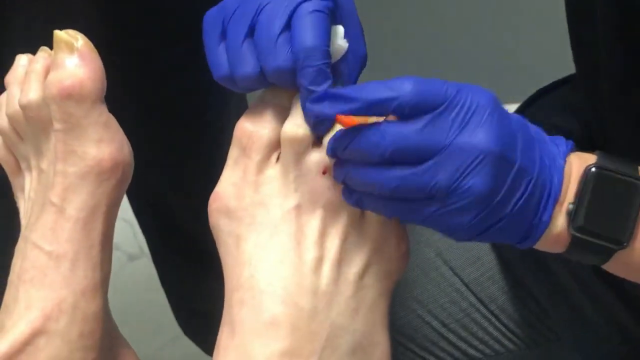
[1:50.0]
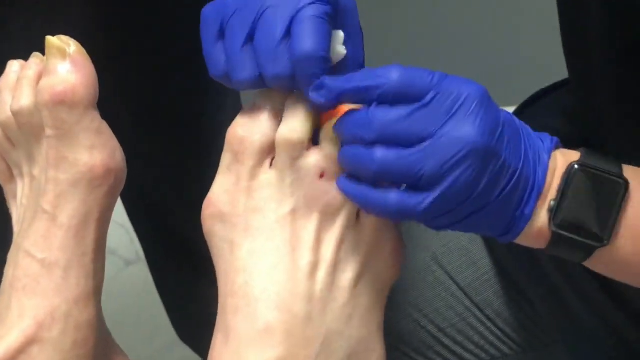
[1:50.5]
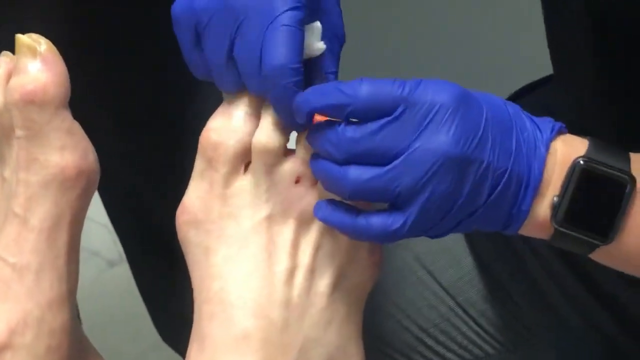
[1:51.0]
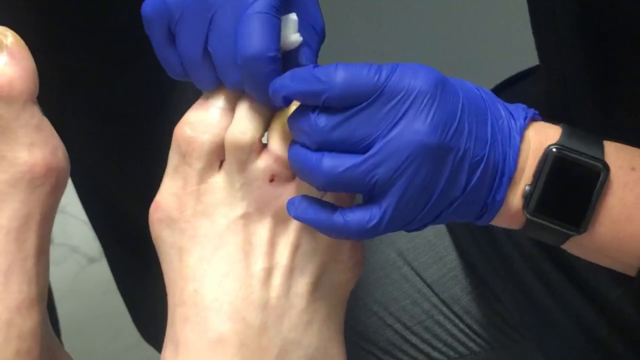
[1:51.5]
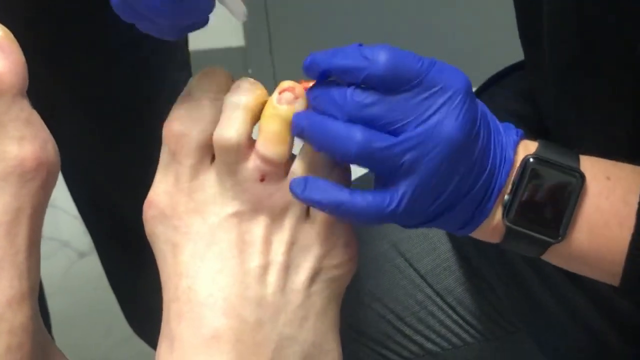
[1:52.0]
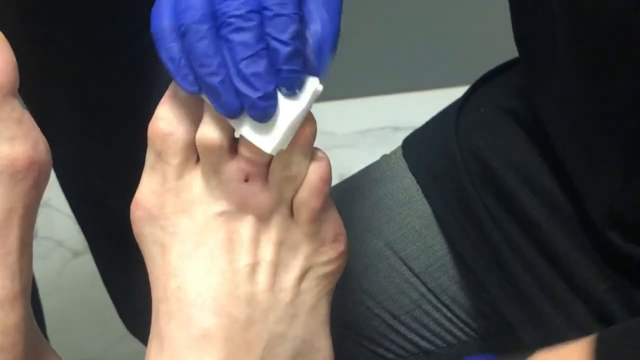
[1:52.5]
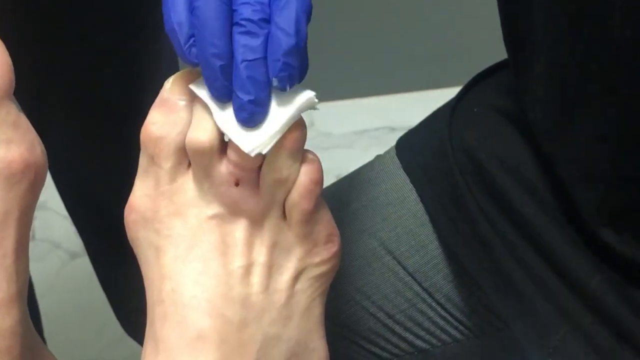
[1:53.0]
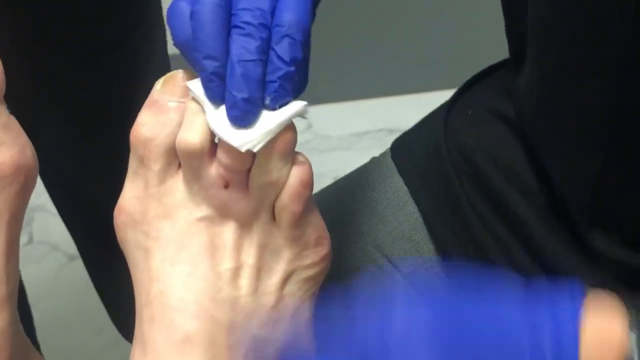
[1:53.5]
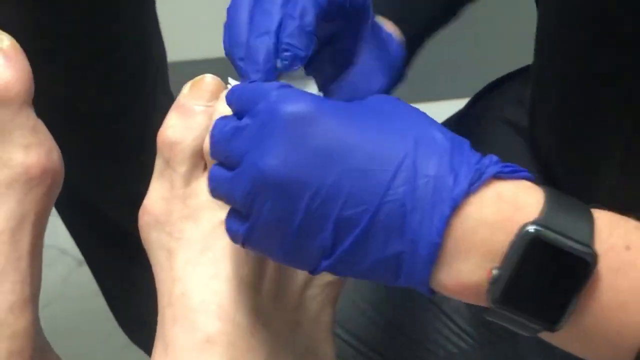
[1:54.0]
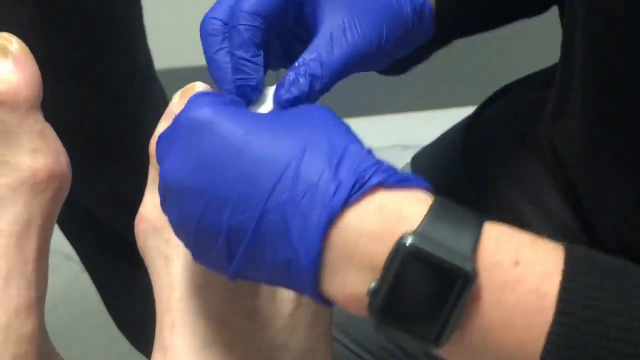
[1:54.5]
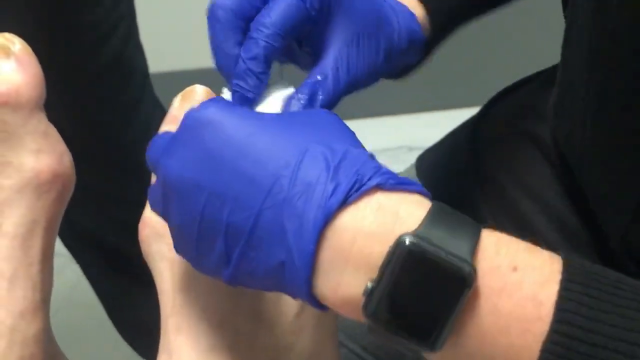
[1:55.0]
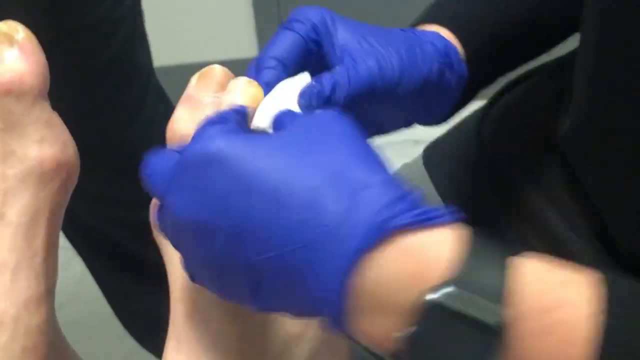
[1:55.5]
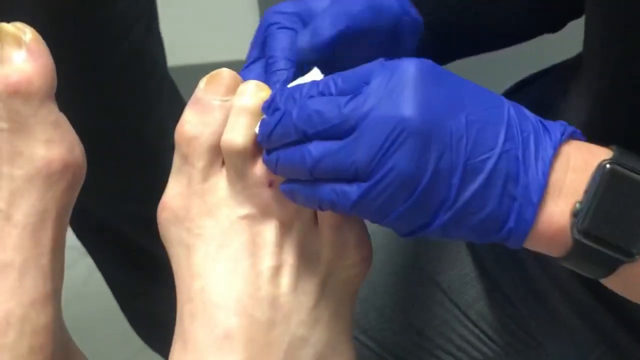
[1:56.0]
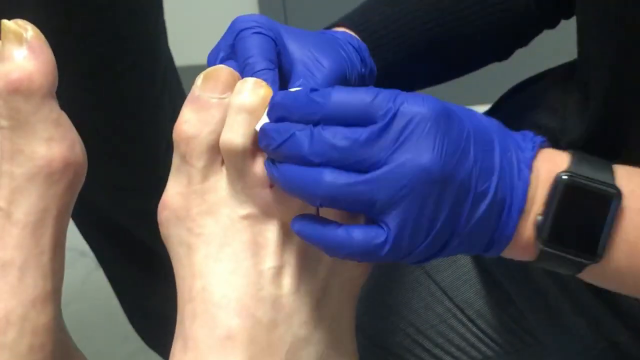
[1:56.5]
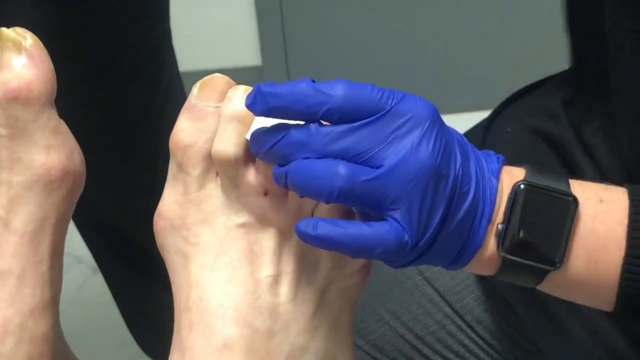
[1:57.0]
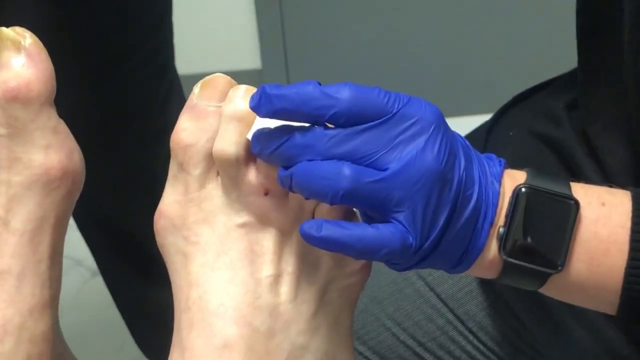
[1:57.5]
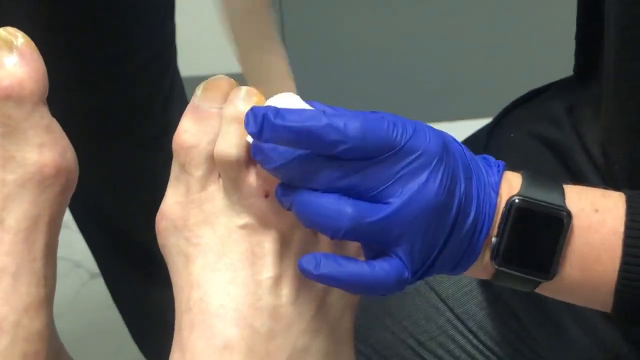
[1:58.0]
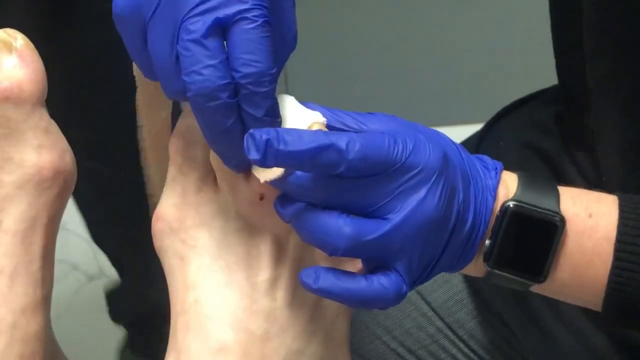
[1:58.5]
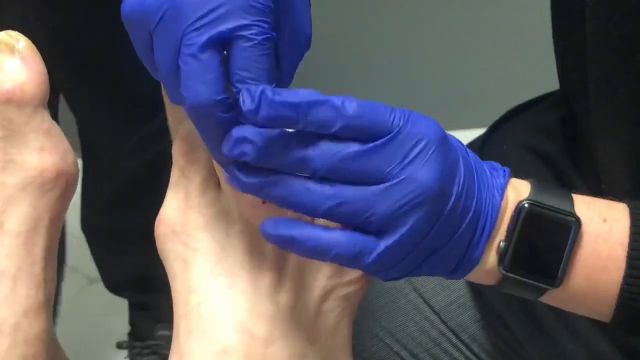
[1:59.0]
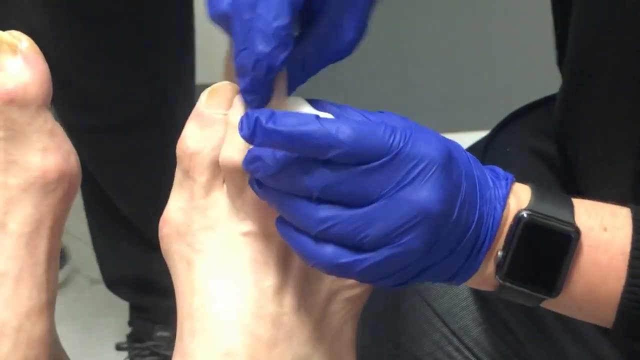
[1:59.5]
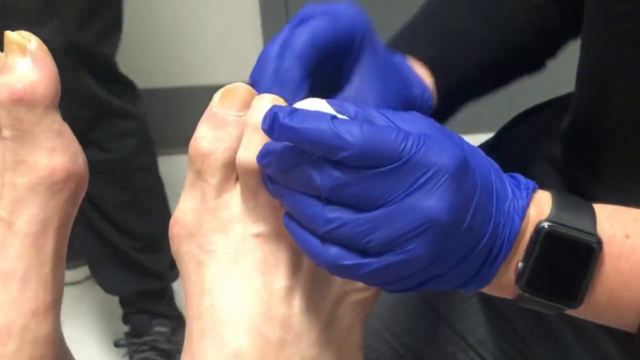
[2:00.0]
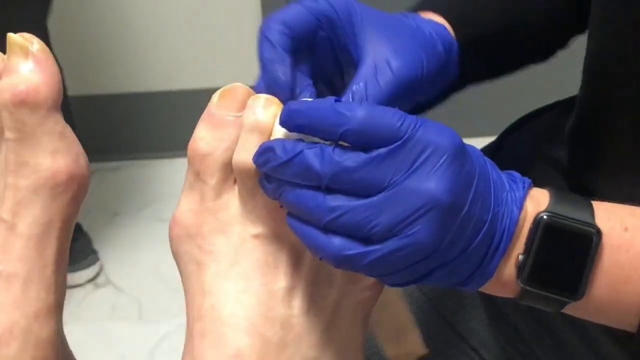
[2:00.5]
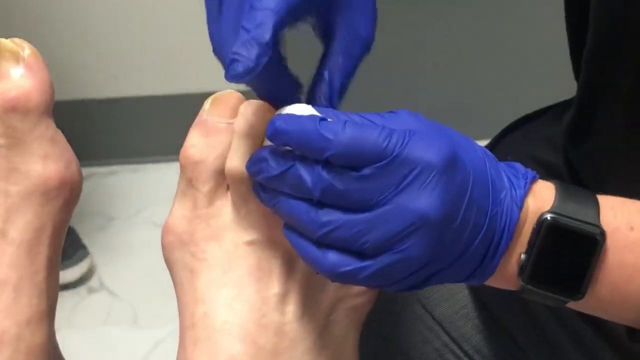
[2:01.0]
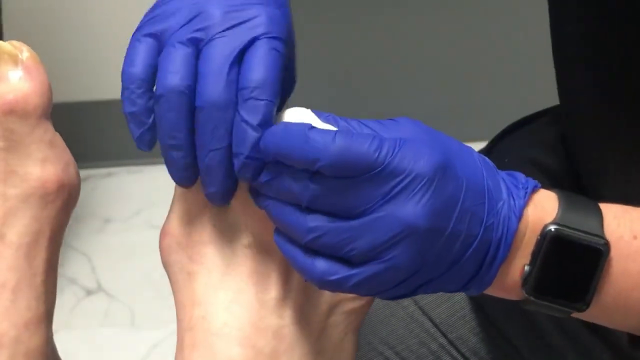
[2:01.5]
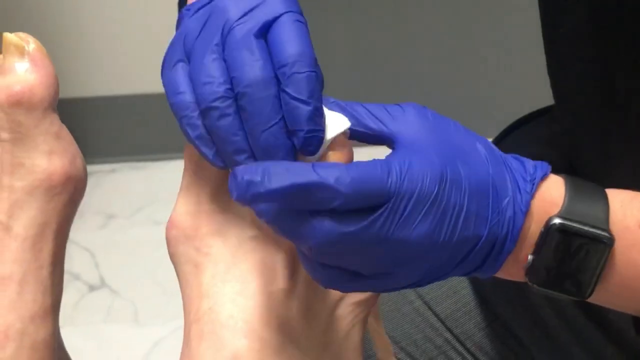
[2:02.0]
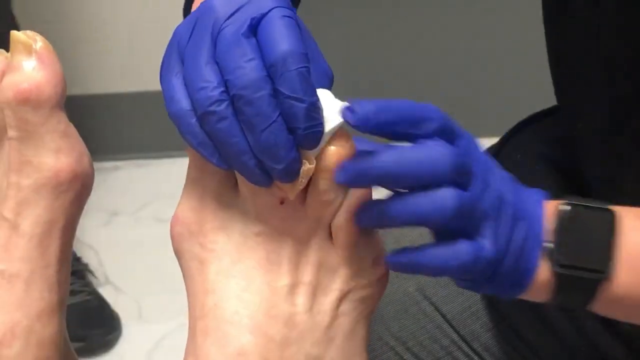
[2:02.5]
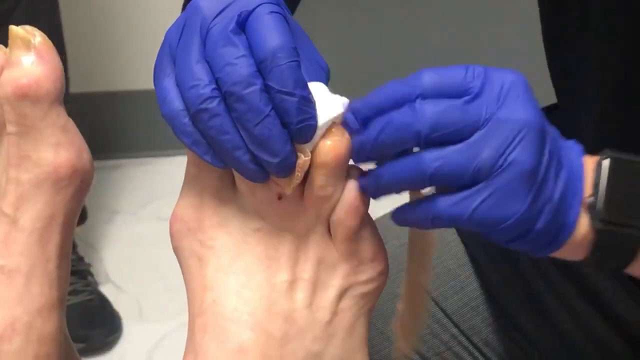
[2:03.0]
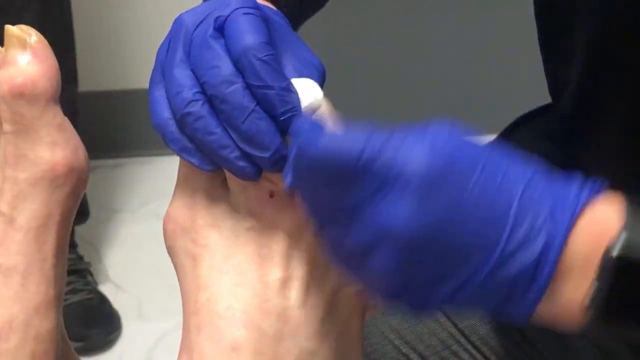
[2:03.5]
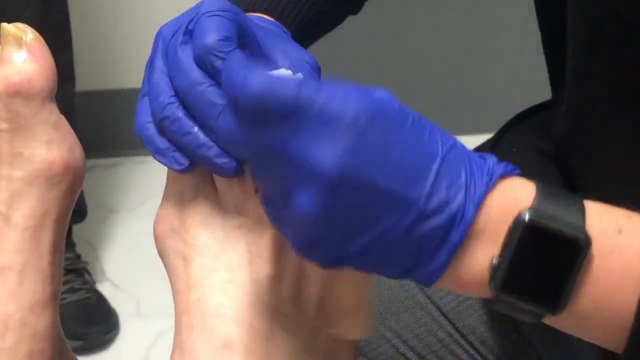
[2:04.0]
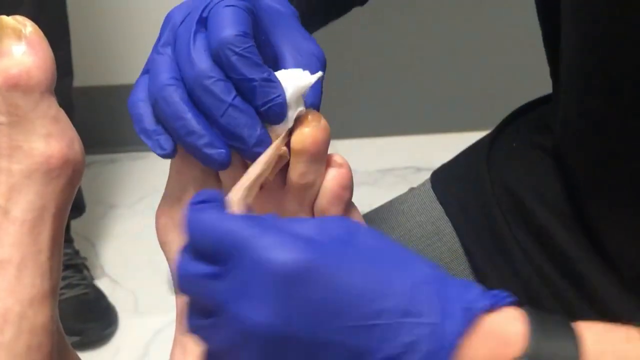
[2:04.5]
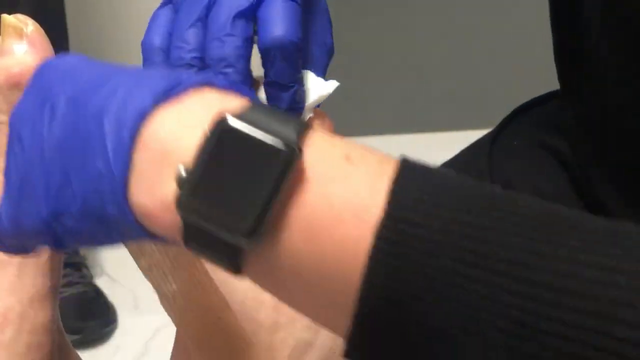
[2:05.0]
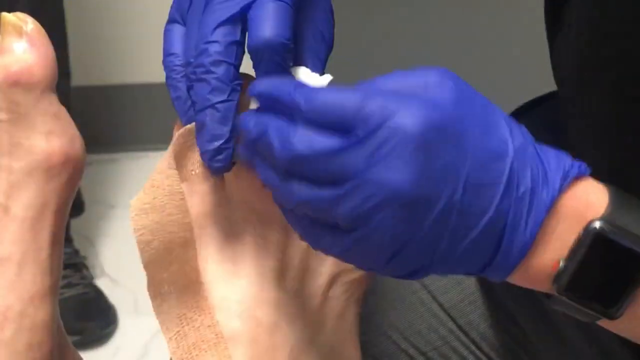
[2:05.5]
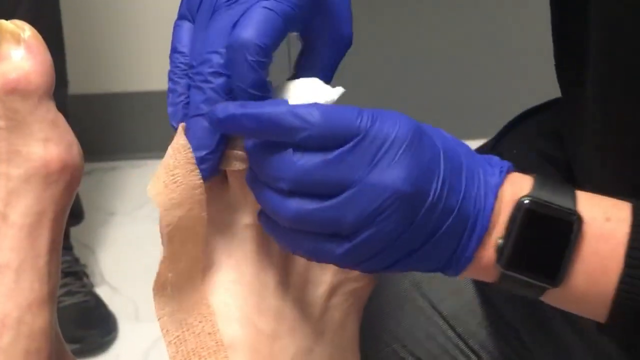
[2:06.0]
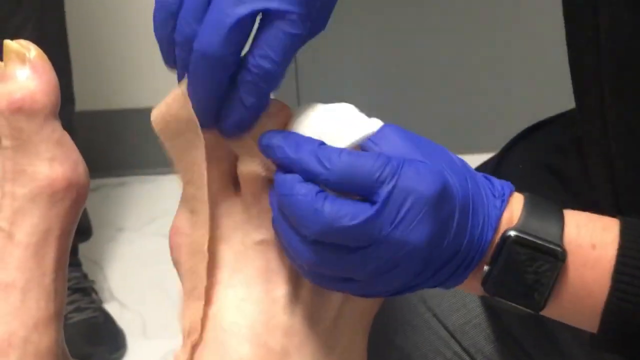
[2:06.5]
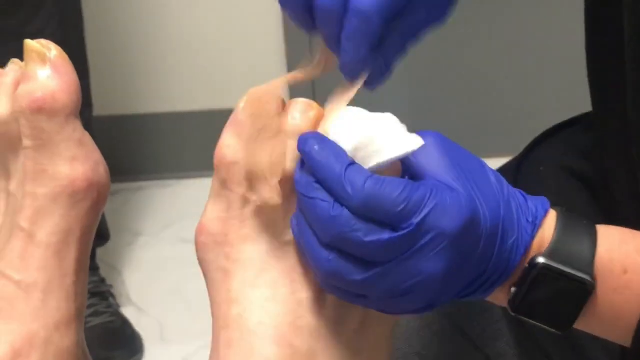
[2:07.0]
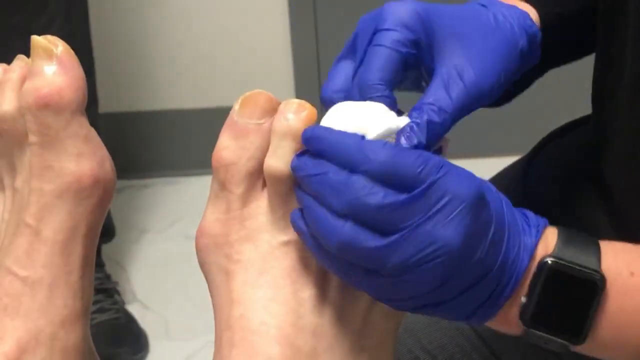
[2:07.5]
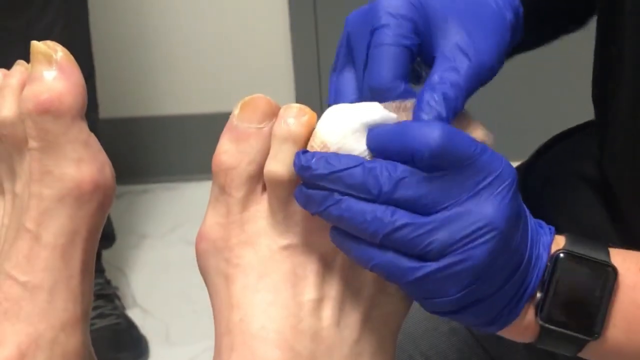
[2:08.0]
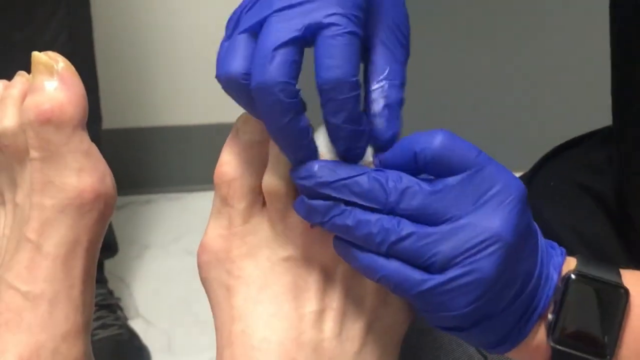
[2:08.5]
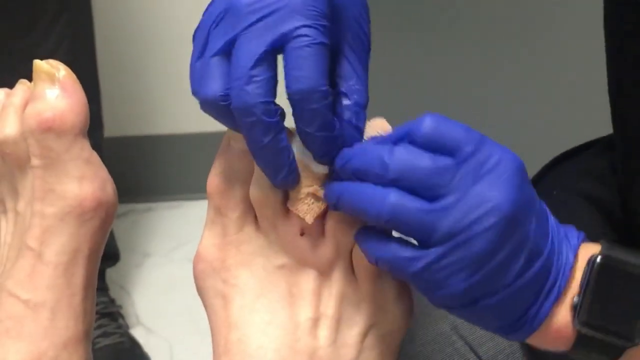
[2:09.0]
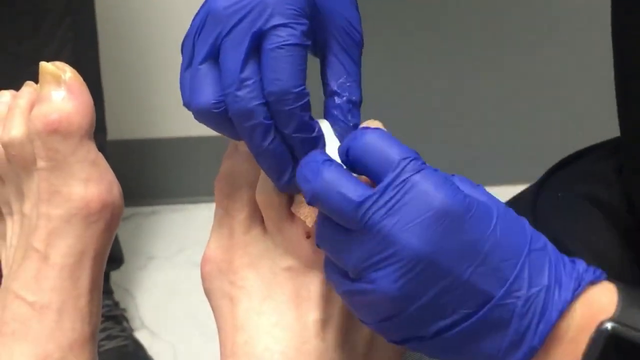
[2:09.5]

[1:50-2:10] The camera zooms back out so both of the woman's feet are visible, along with the lady working on them, who seems to be wearing black scrubs. She has on an Apple Watch with a black rubber band and is still wearing the dark blue gloves. She takes the rubber band and moves it up the woman's foot, then wraps the gauze around the toe so it forms around it. She uses a piece of medical tape, probably six or seven inches long, to wrap the gauze onto the woman's foot, and some of the toes get in the way. The foot being worked on is Caucasian and definitely looks like it belongs to someone in their 50s or 60s; it has some major bunions and very long, skinny toes.